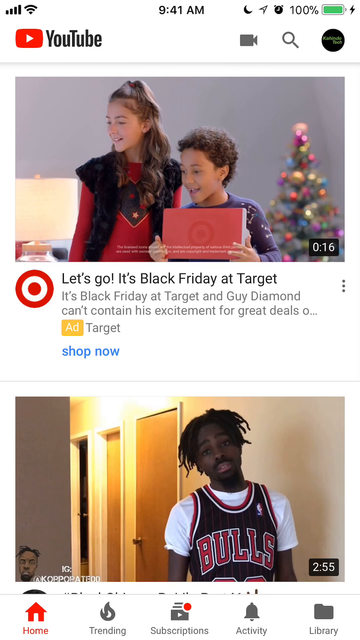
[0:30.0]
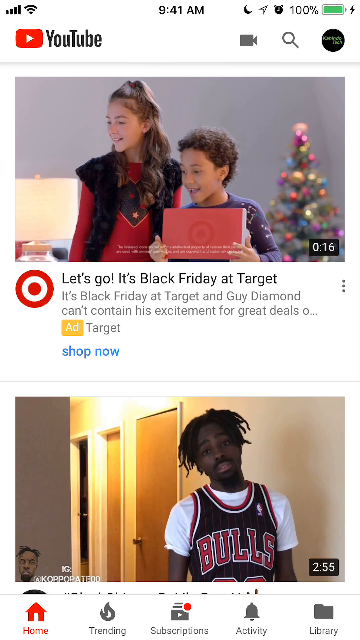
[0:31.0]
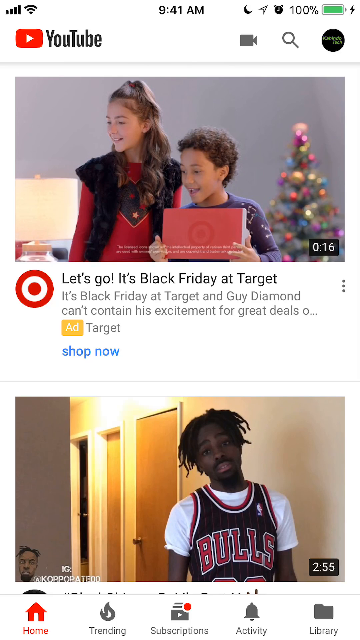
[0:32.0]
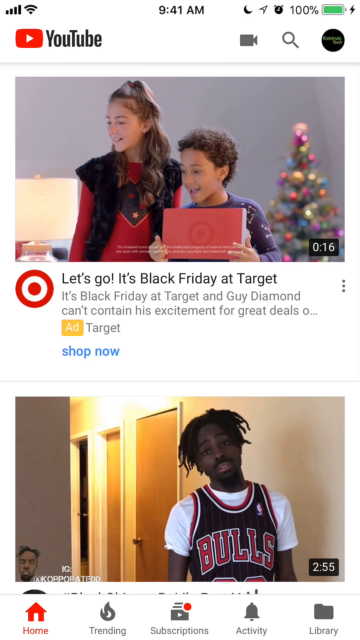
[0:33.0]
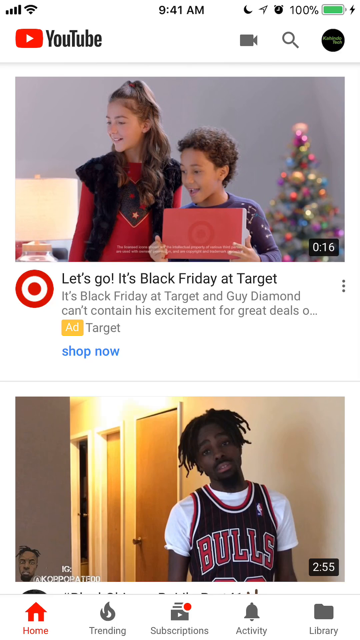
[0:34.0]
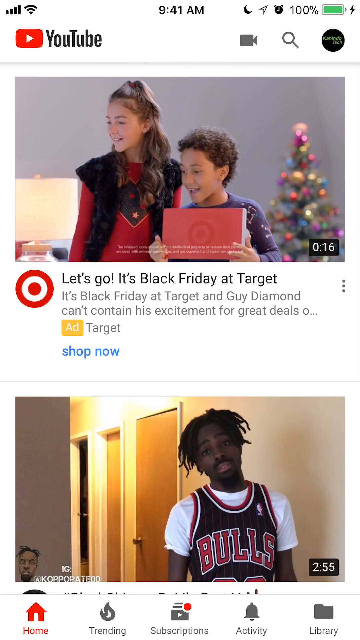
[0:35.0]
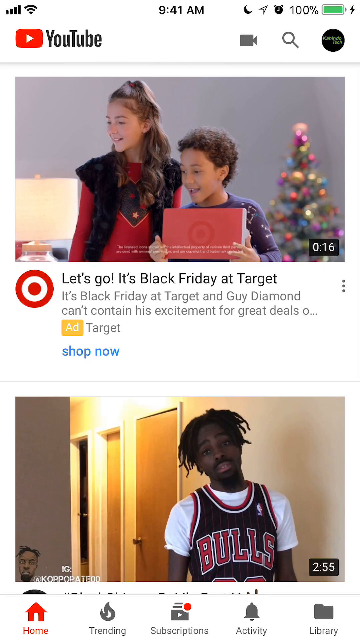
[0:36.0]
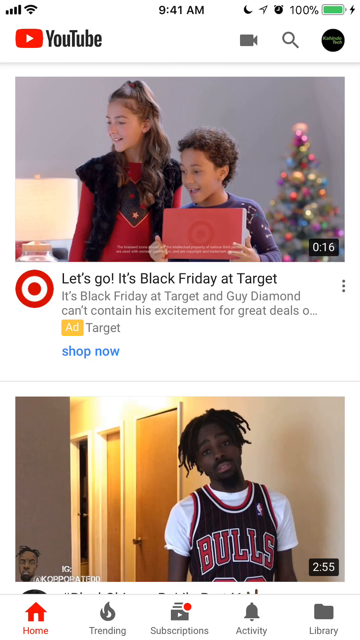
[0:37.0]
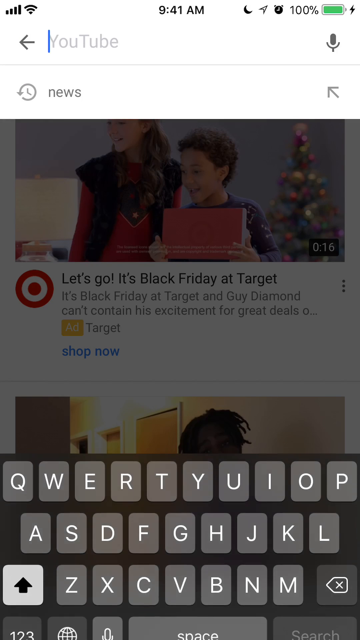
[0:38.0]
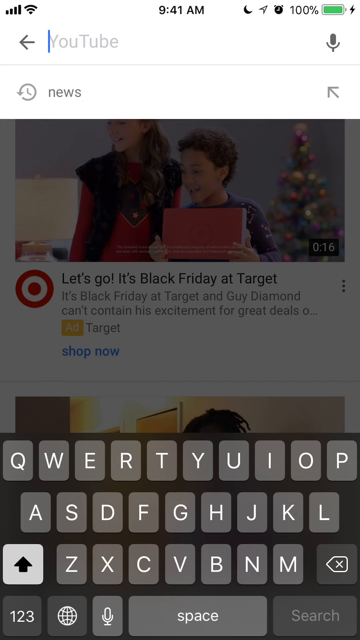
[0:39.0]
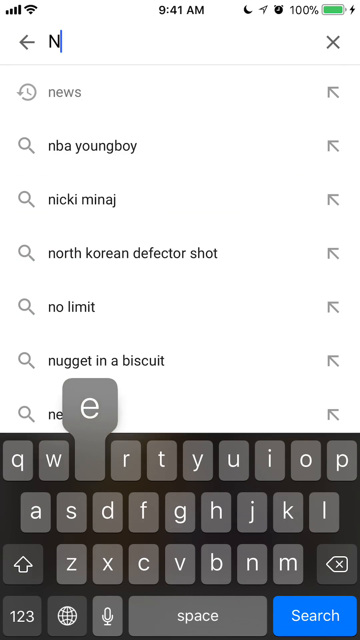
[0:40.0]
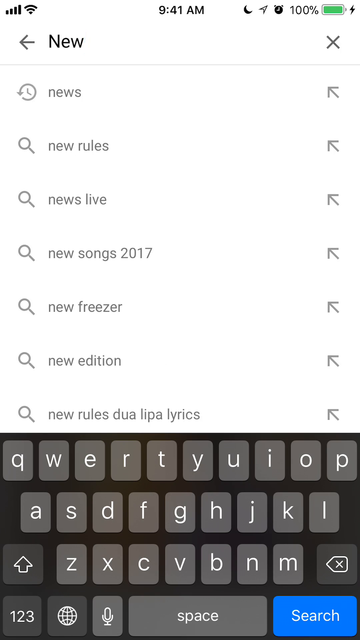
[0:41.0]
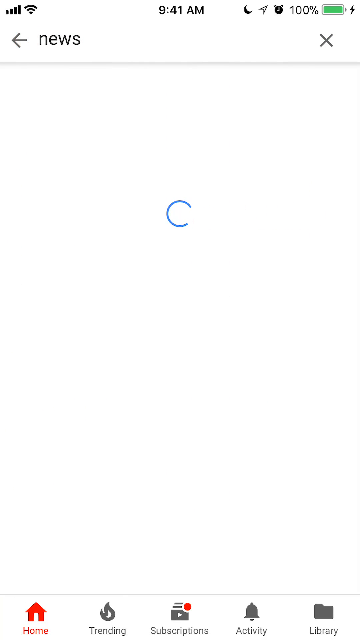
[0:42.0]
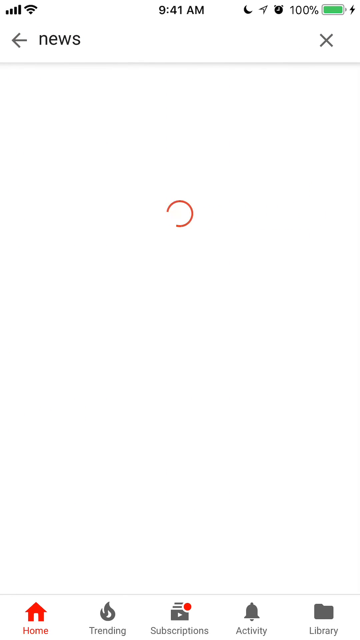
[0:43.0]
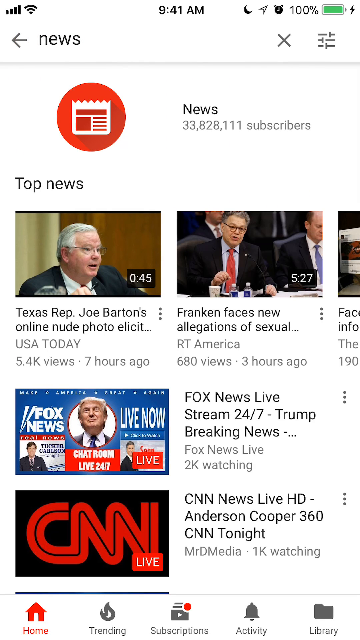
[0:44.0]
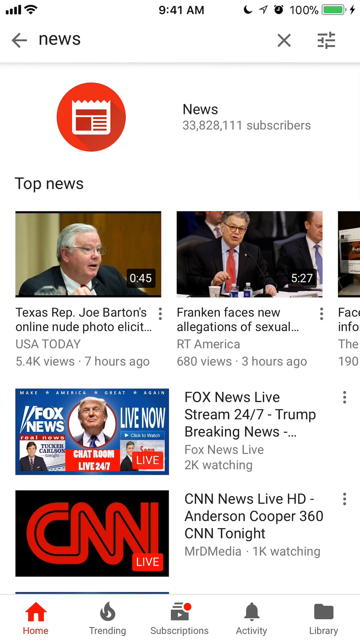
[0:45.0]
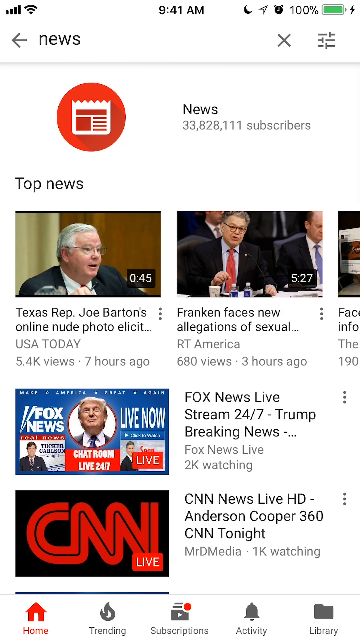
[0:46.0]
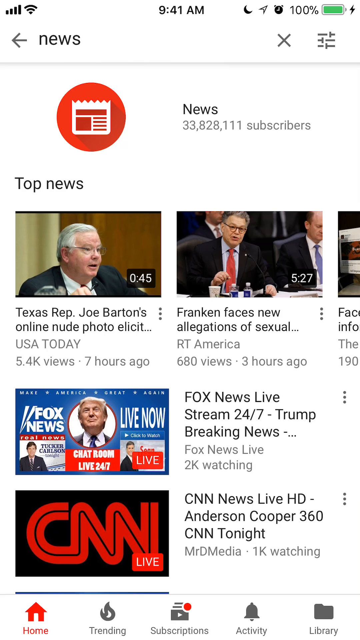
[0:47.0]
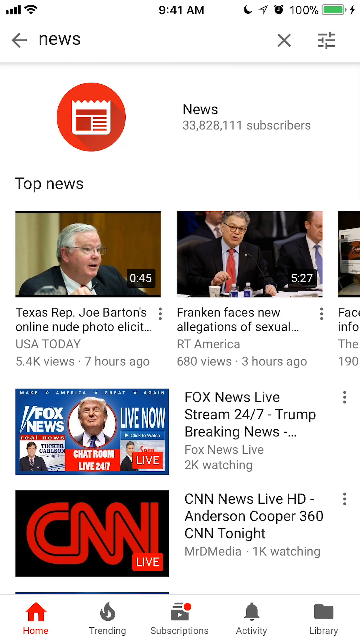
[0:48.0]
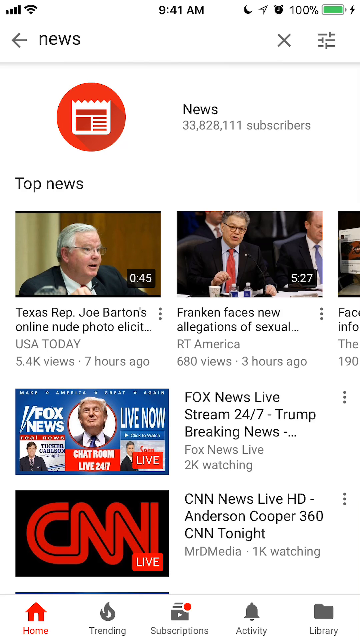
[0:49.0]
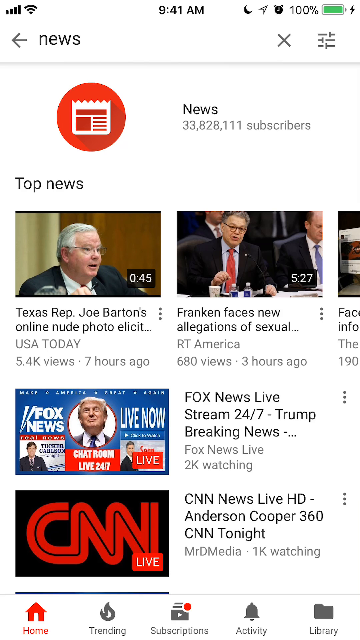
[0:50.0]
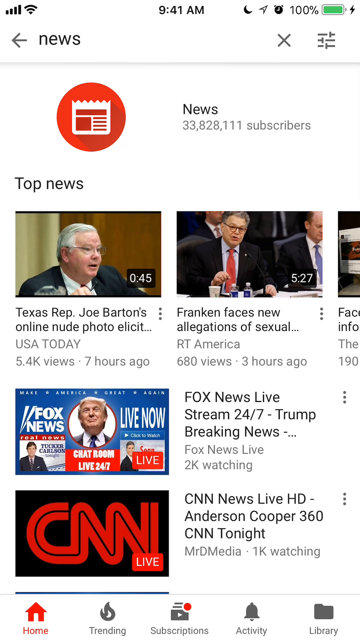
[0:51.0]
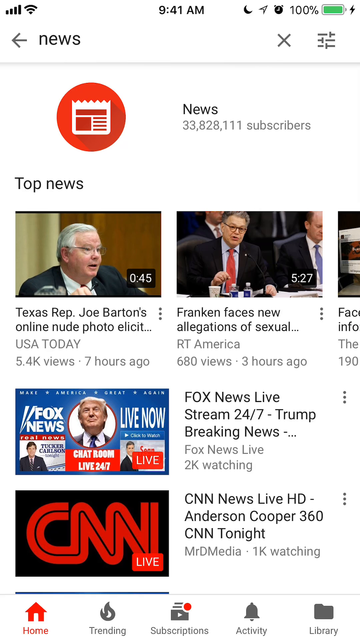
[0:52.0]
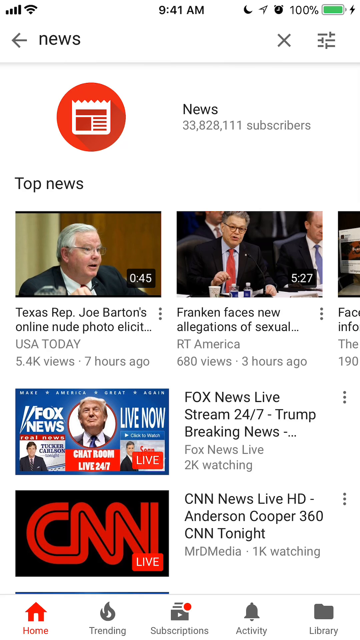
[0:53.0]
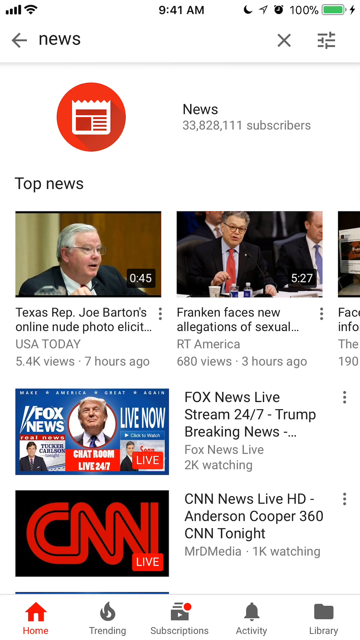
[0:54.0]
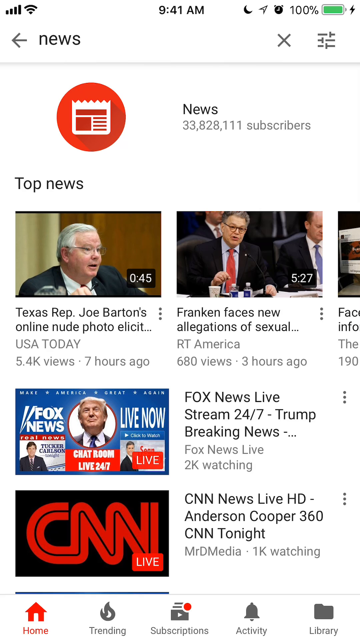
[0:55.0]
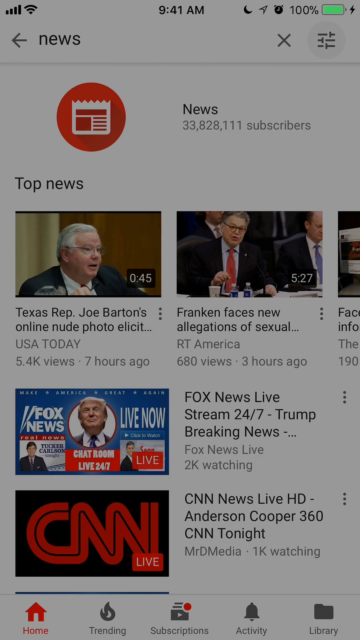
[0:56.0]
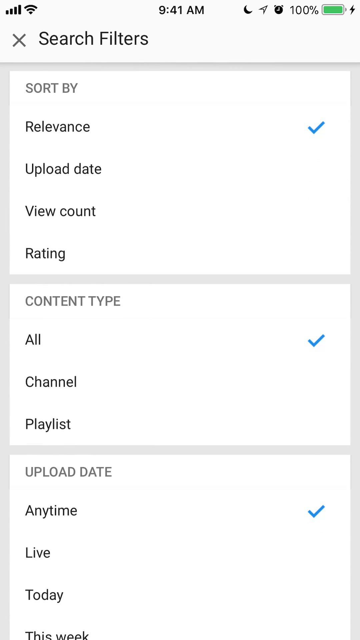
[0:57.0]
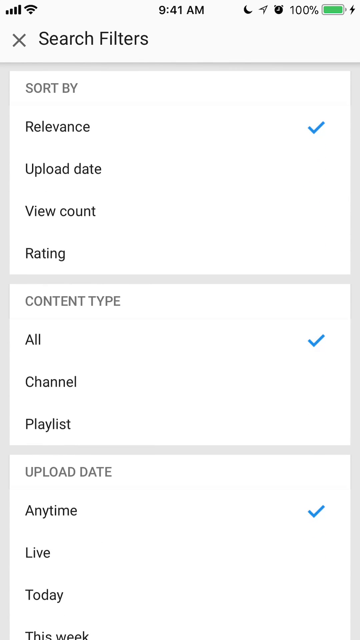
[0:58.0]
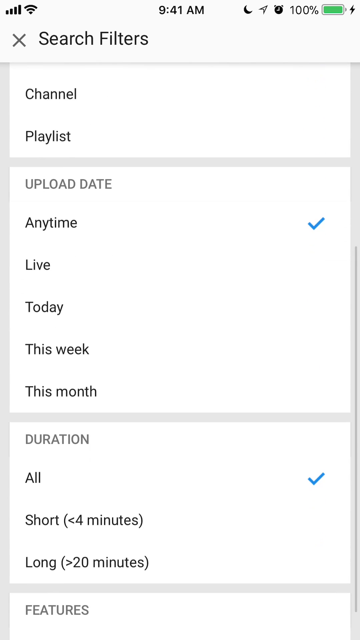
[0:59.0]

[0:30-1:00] The person, still using the iPad, searches for news. The main content area shows a news page with 33,828,000 subscribers, and the top news section has 3 videos with 3 headers. The person then sets up notification permissions, choosing when to be notified, and selects any time.